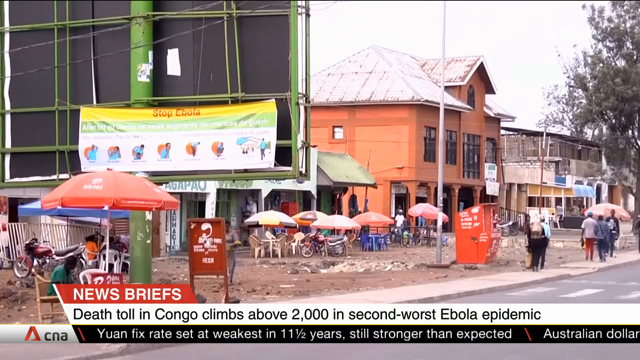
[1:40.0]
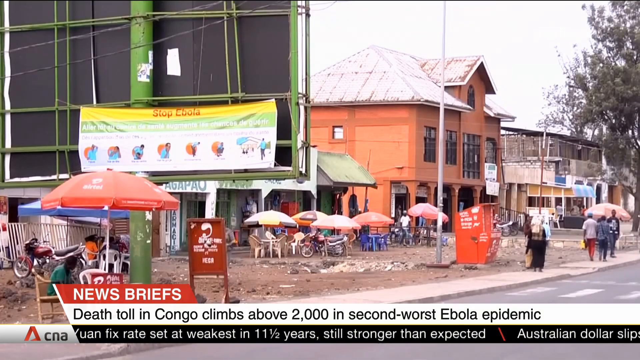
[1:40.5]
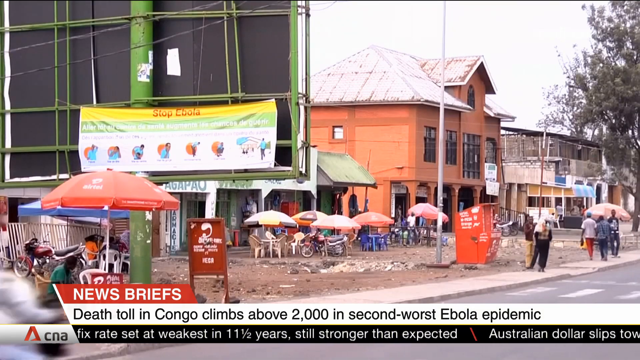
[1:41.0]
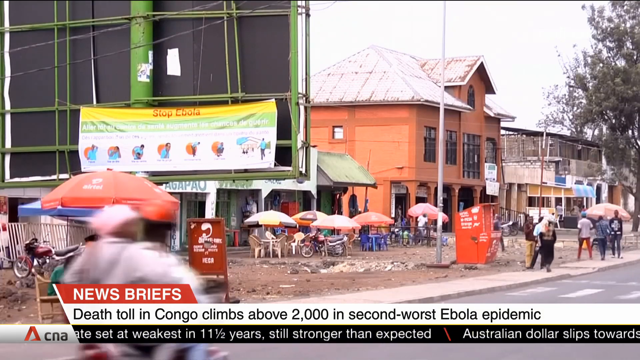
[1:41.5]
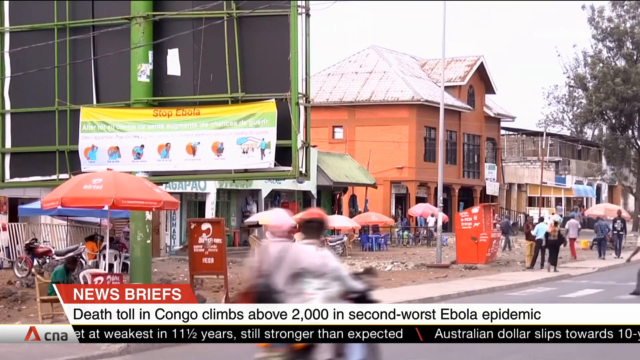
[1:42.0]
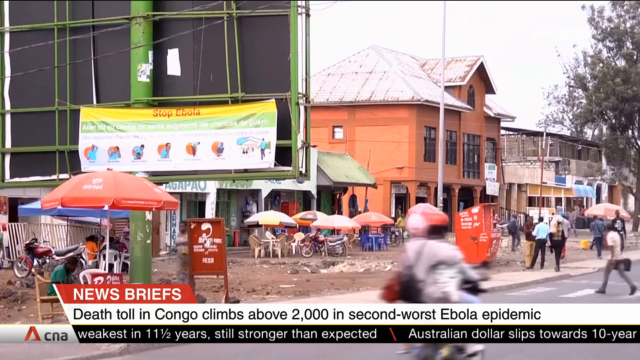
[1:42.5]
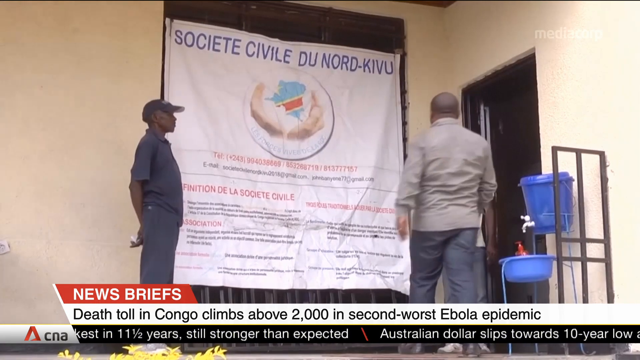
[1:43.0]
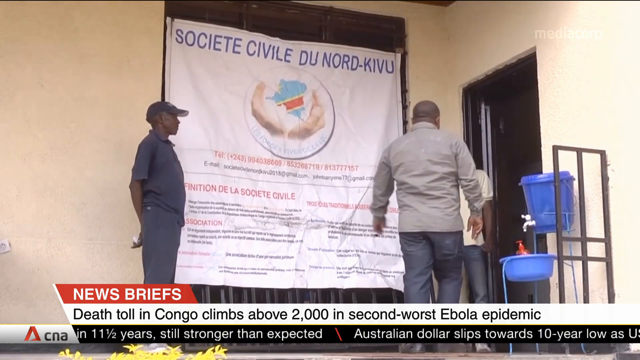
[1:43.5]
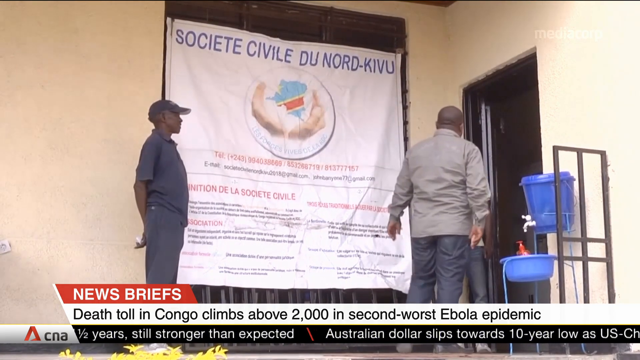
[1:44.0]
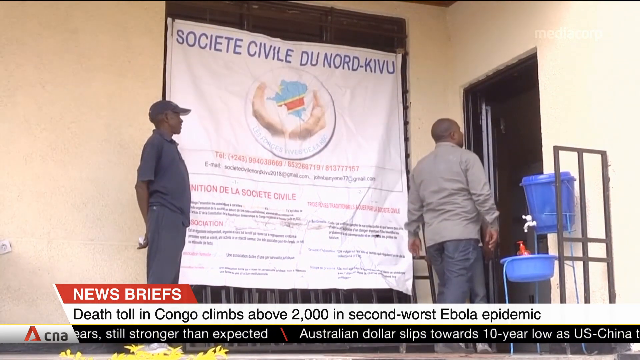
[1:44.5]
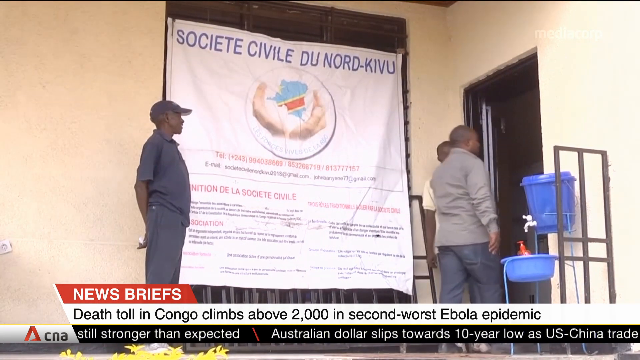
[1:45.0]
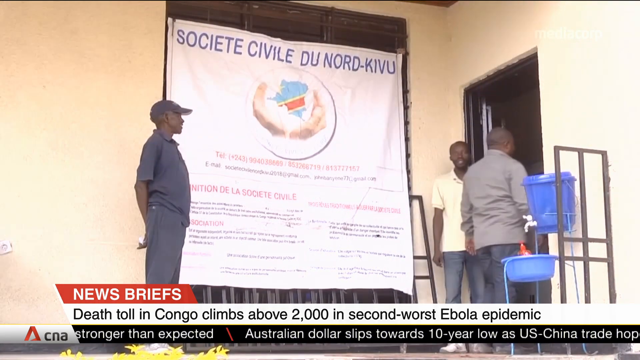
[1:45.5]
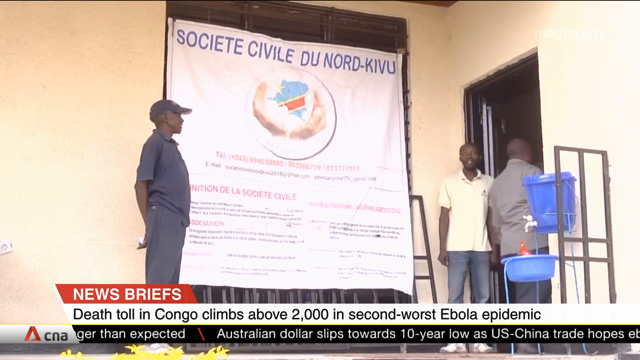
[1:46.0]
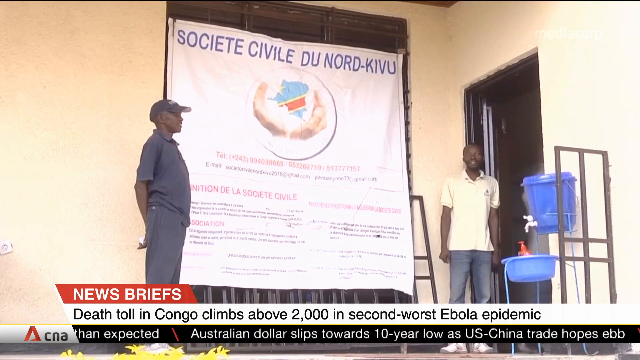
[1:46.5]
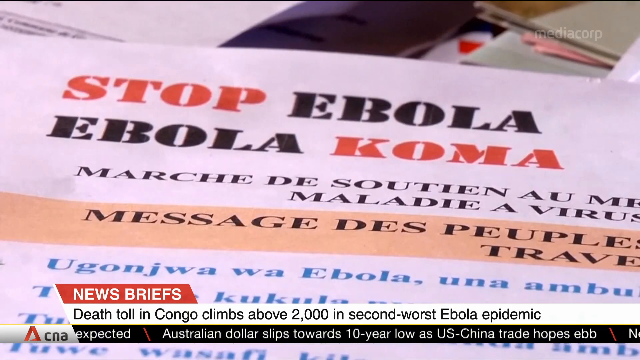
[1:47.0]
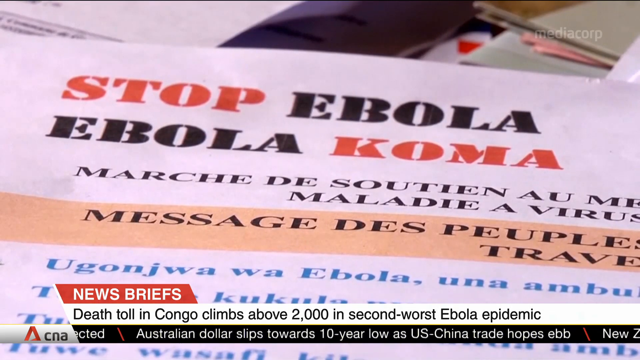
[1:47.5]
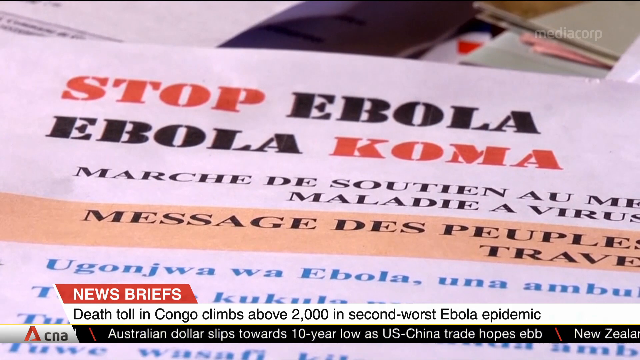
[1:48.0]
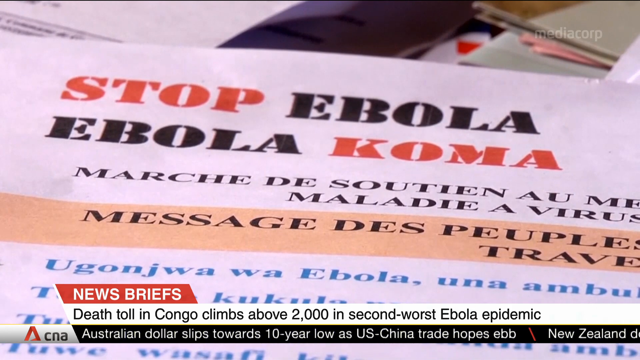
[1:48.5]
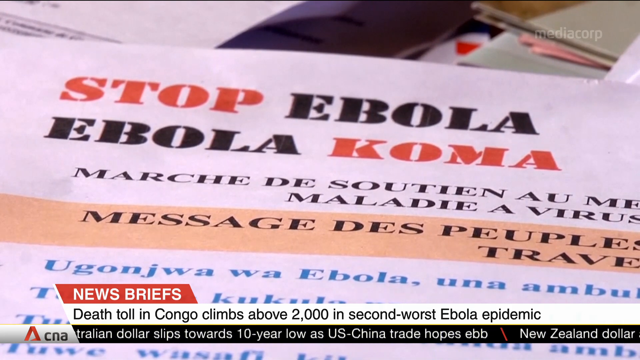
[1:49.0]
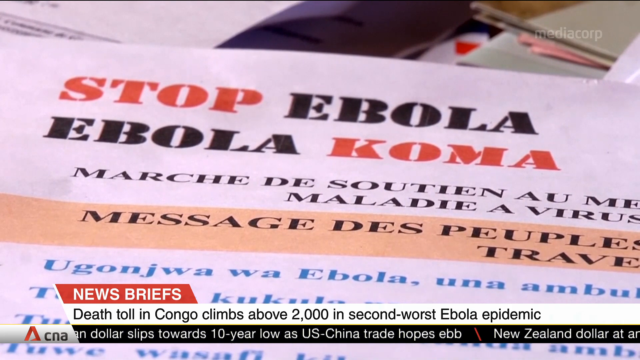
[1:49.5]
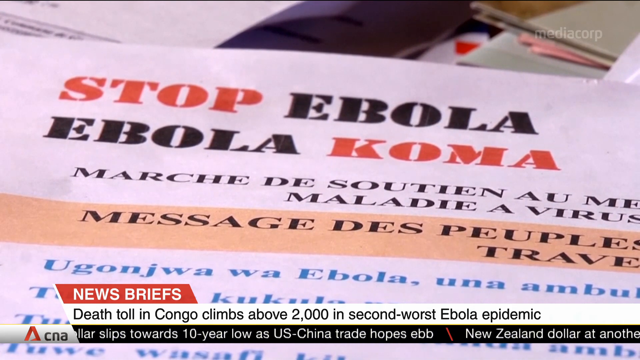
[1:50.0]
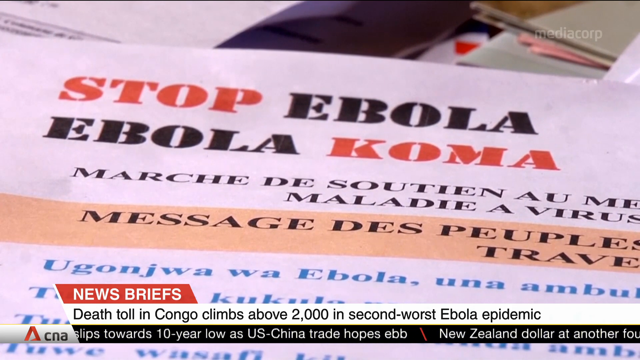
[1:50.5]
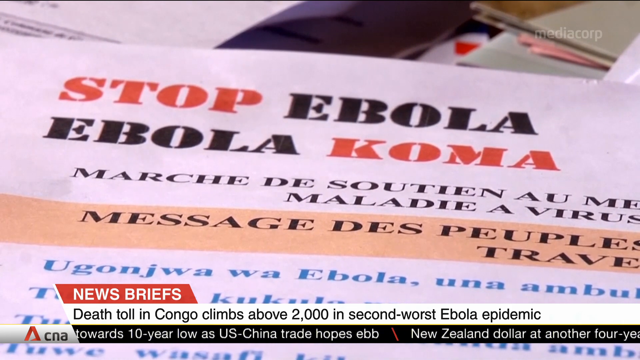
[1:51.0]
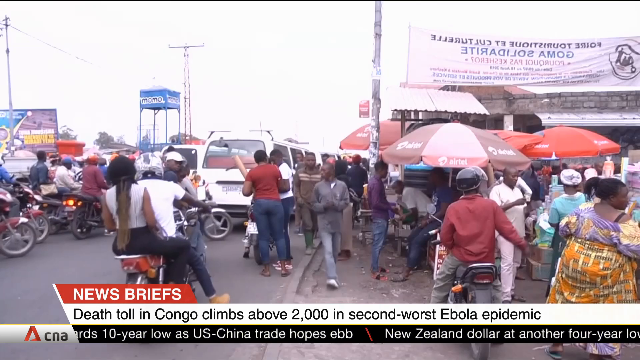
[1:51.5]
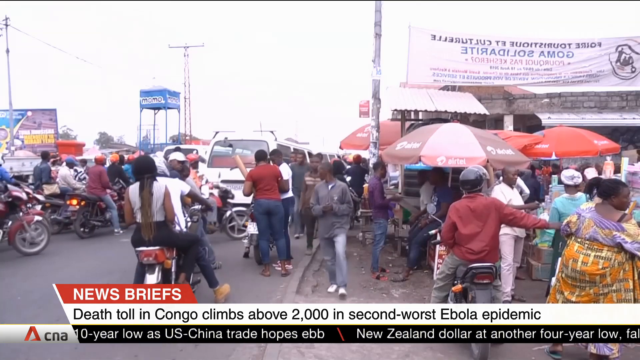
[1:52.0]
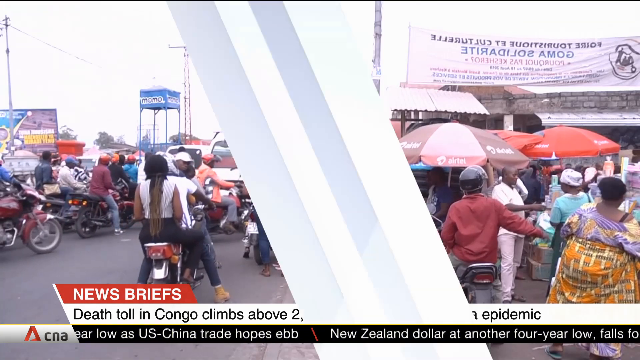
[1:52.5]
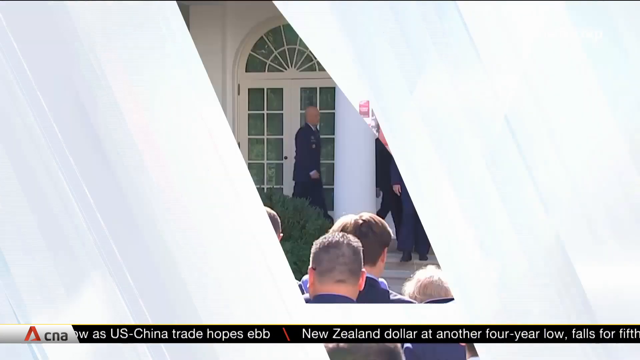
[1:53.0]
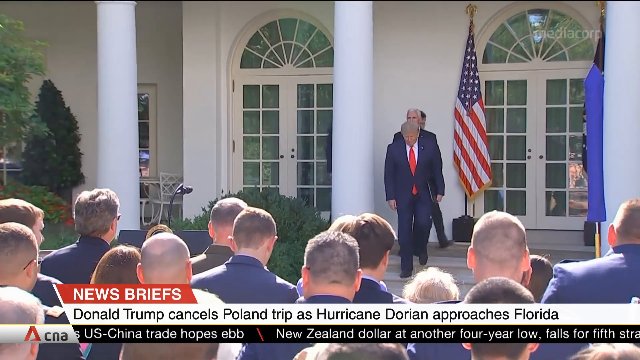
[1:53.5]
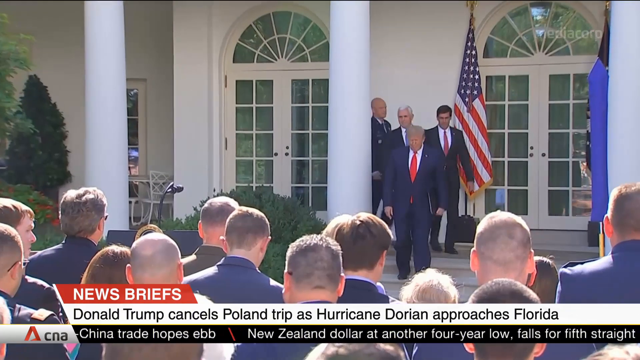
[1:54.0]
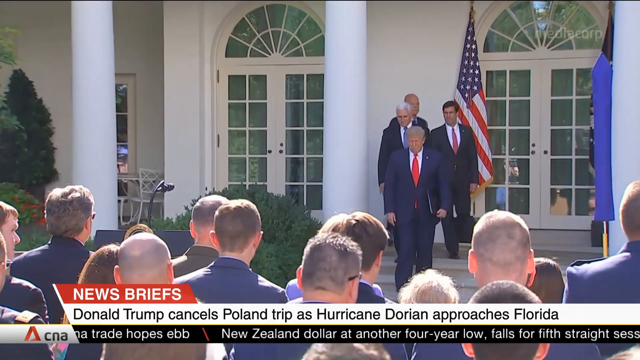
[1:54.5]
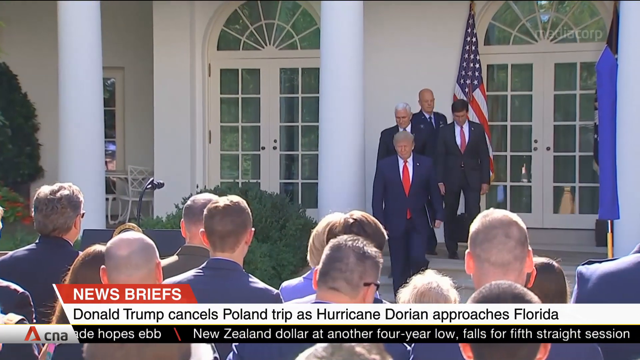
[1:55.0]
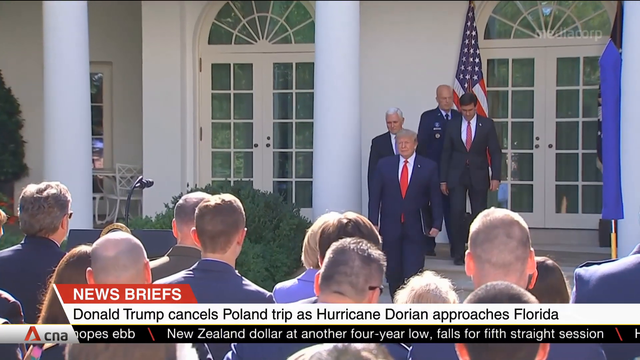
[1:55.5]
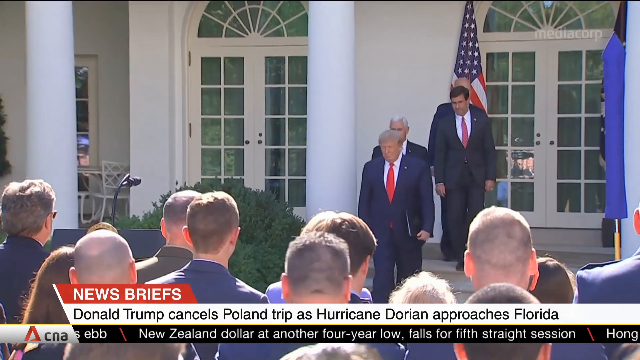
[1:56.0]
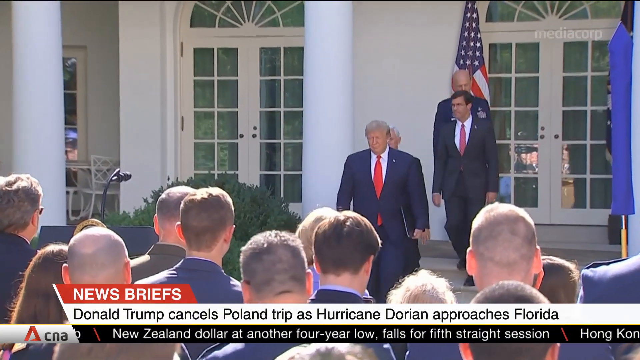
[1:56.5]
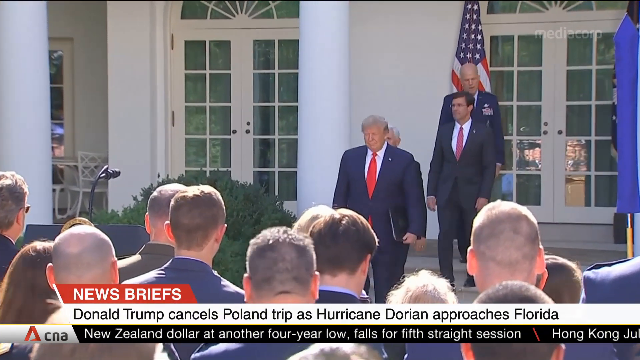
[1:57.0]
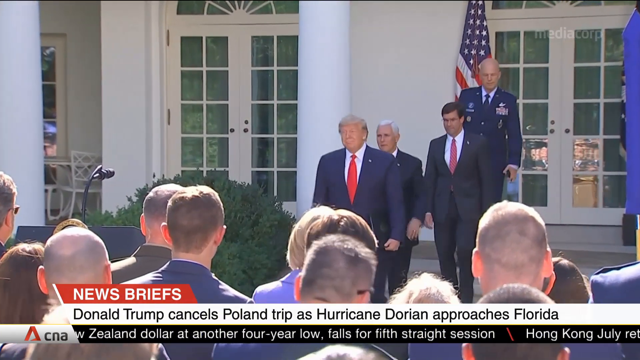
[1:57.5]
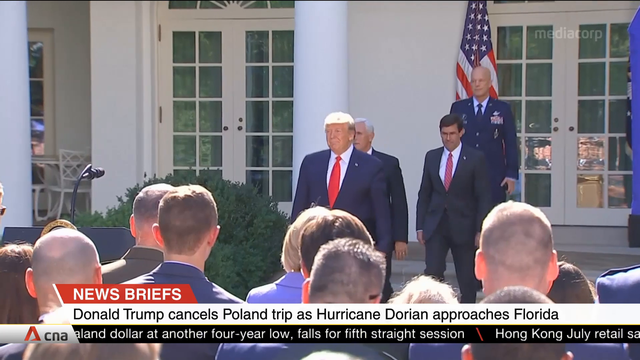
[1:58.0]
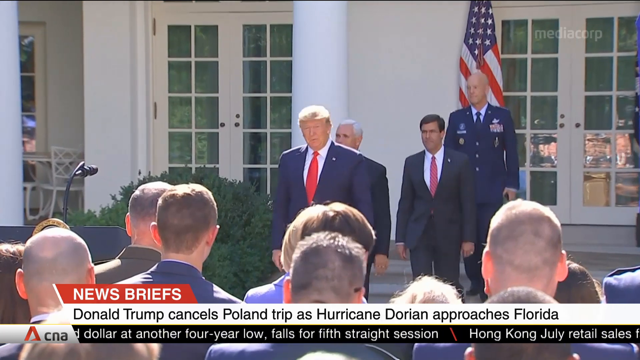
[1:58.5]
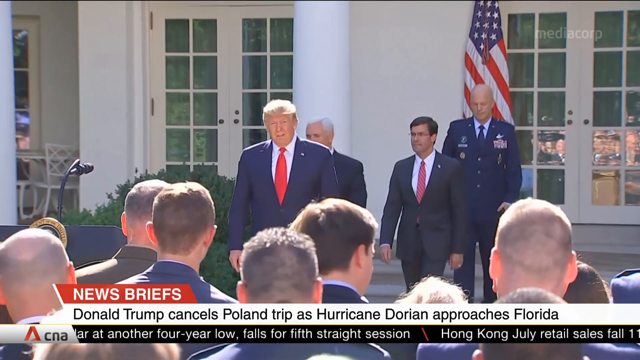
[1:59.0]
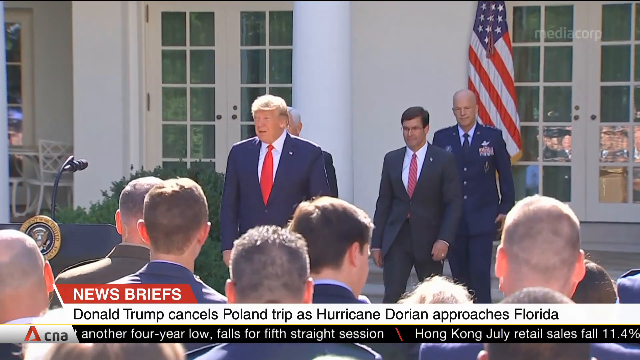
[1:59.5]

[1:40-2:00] The same hospital is shown. Someone walks into what is apparently that hospital, possibly to be tested. A street view follows, showing many people walking around the street. Another story begins with the text "news brief Donald Trump cancels Poland trip as Hurricane Dorian approaches Florida." Trump walks toward the crowd, with Mike Pence and two other people walking behind him. It is daytime. Trump wears a red tie and a big navy blue vest and has his signature kind of blonde, beige hair.